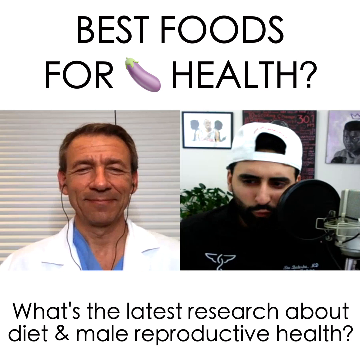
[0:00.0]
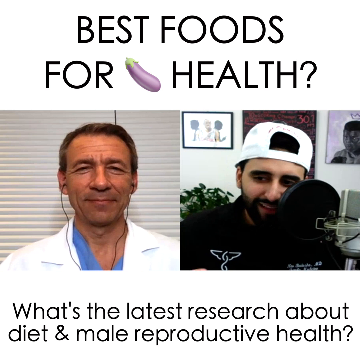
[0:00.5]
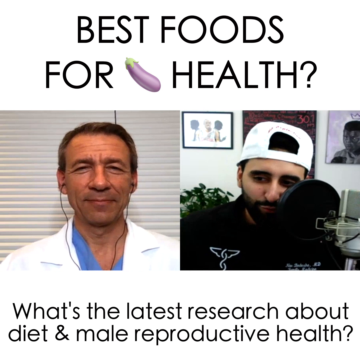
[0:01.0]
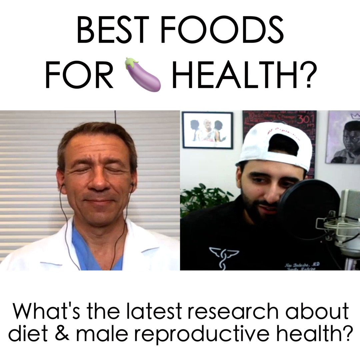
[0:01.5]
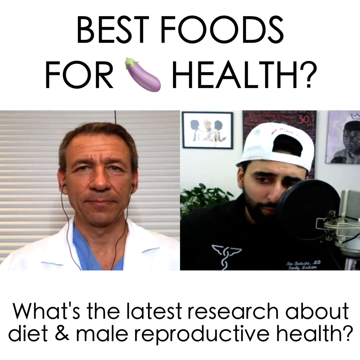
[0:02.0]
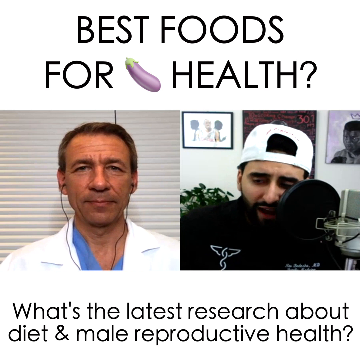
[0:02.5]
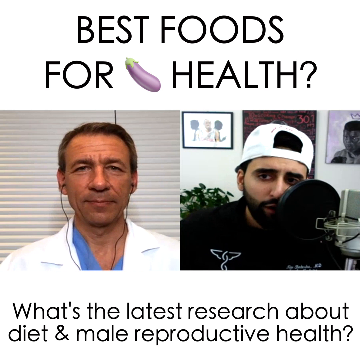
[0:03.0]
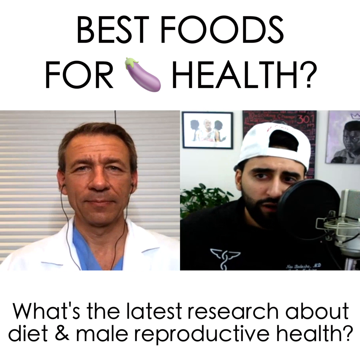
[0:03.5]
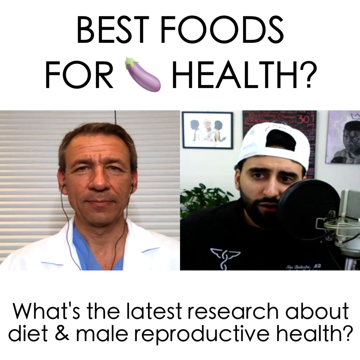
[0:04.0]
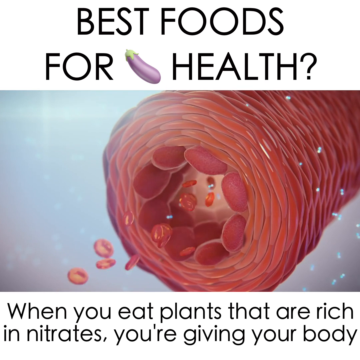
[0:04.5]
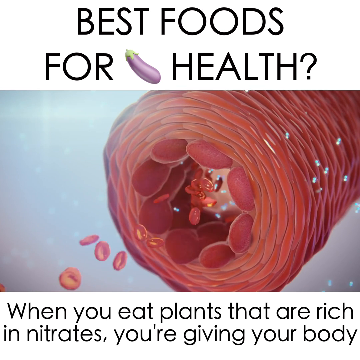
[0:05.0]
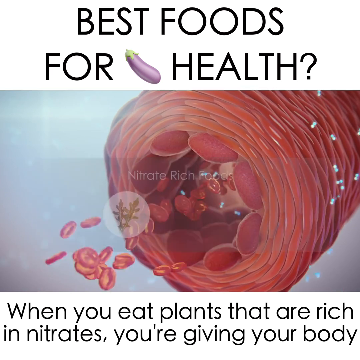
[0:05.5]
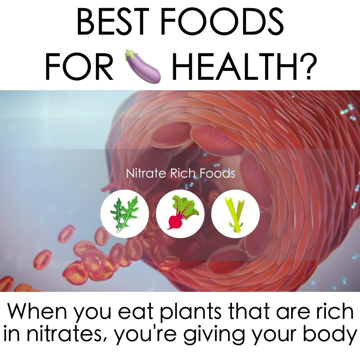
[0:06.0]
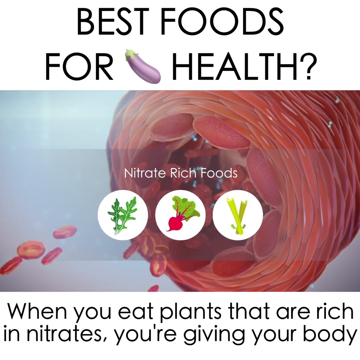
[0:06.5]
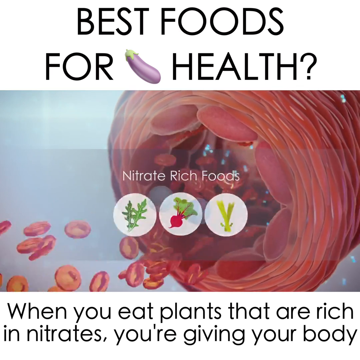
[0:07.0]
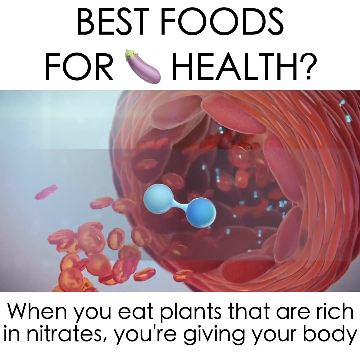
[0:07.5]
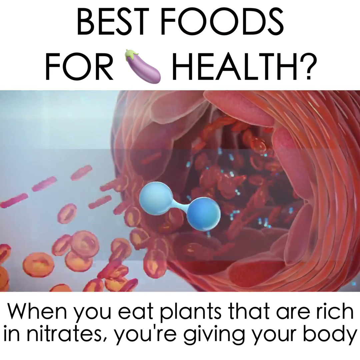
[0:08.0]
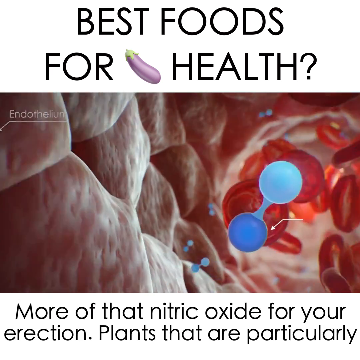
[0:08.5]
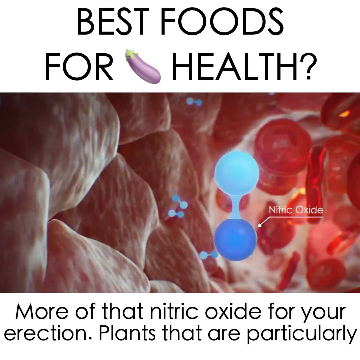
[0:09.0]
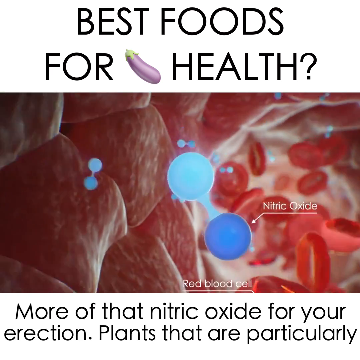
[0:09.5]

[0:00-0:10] What looks like a YouTube video or podcast shows a man on the right of the screen interviewing a doctor on the left. Each is in his own office or home, with different backgrounds. The man on the right wears a black shirt and a backwards white baseball cap, while the man on the left wears a blue doctor's shirt and a white doctor's jacket and has wired earphones in his ears. The man on the right talks into a microphone, smiling as he talks, while the man on the left listens and smiles. Across the top is a white band with black block-letter text reading "best foods for health", with an emoji of an aubergine after the word "for". Across the bottom is another white band with black text reading "what's the latest research about diet and male reproductive health". The video is then replaced by an animation of some kind of medical image depicting an unclear organ of the human body. Small red circles come out of what looks like a red tube, moving from right to left. In the centre of the screen are two blue circles joined by a blue line, and in the next shot this floats through a red tube. Over the red tube, white text reads "nitrate rich foods", and there are three images inside white circles: one of leafy greens, one of a radish and one of two sticks of celery. The text across the bottom reads "when you eat plants that are rich in nitrates you're giving your body", then changes to "more of that nitric oxide for your erection. Plants that are particularly".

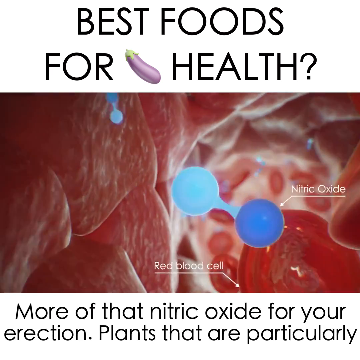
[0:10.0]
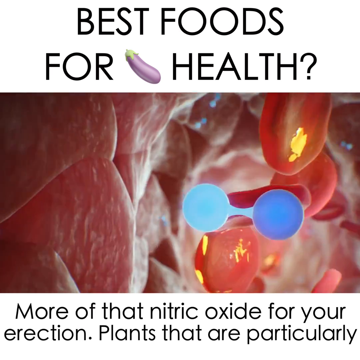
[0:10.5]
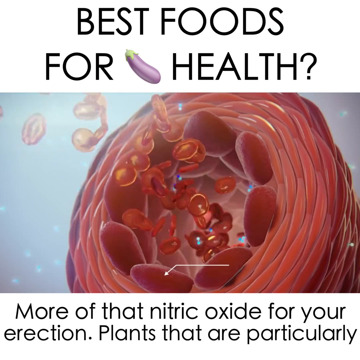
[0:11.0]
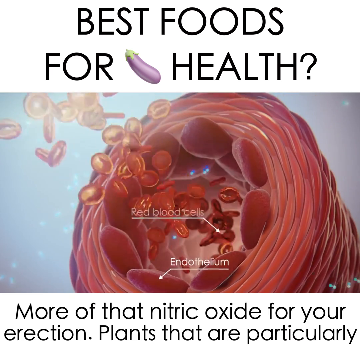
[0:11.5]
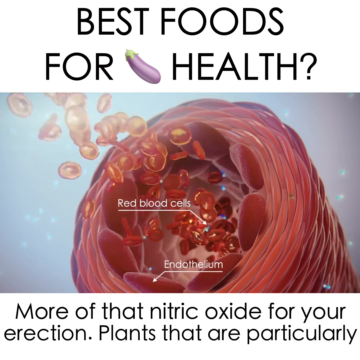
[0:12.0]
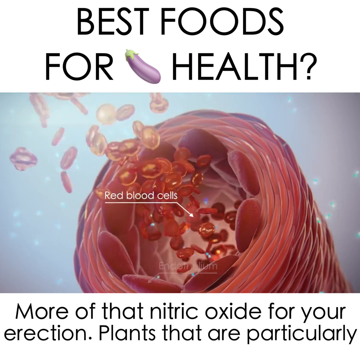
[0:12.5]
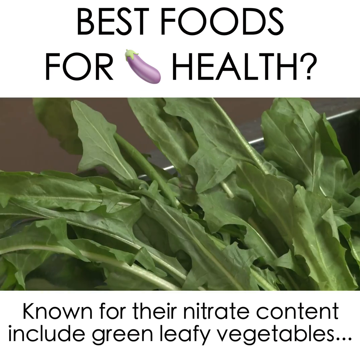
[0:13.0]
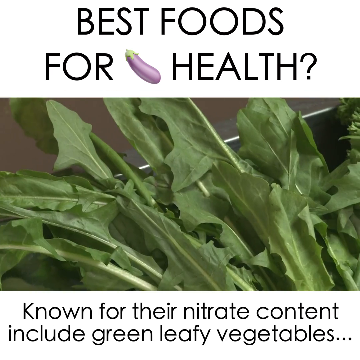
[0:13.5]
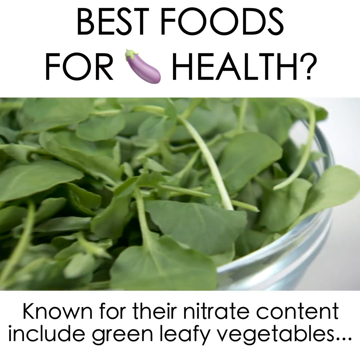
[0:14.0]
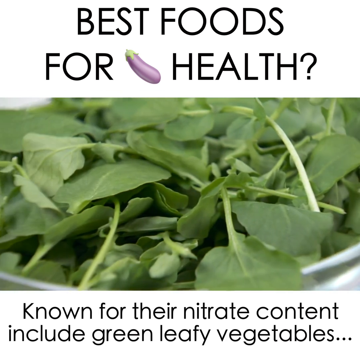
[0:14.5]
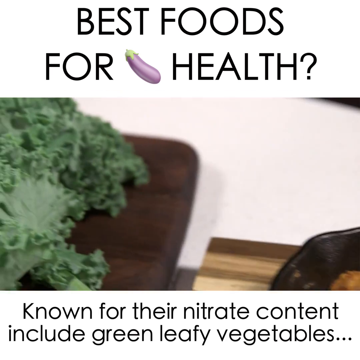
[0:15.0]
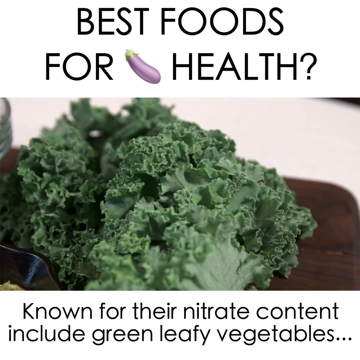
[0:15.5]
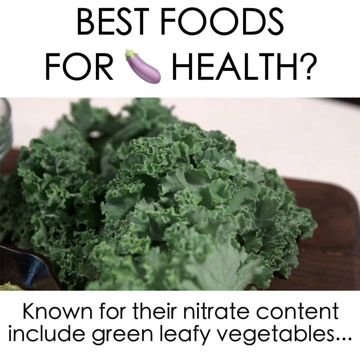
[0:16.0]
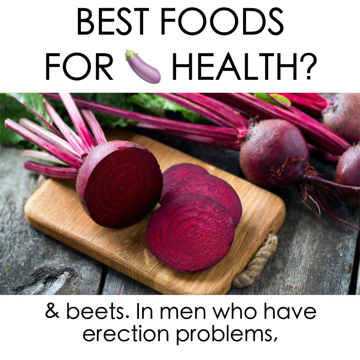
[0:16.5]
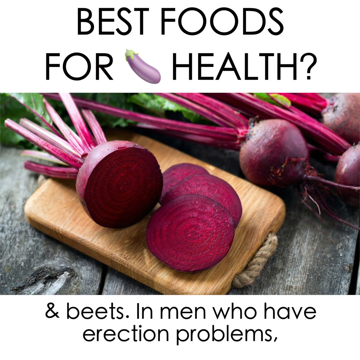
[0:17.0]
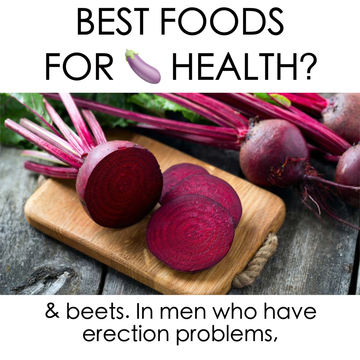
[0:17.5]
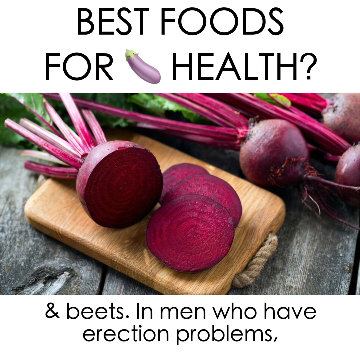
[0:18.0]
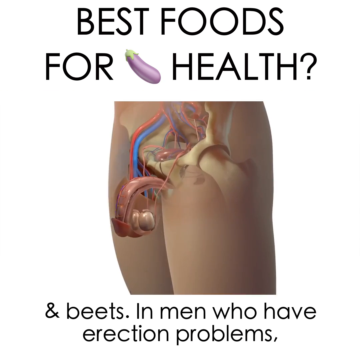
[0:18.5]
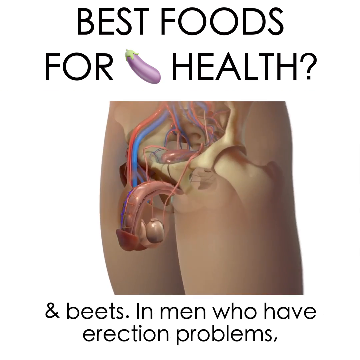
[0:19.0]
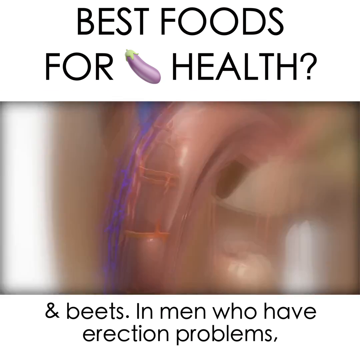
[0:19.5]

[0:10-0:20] An animation shows something happening inside the human body: the view is inside a red tube, with red circles floating through it along with two blue circles joined by a blue line. Across the top, black block-letter text on white reads "best foods for health", with an emoji of an aubergine after the word "for". Across the bottom, black text on a white background reads "more of that nitric oxide for your erection, plants that are particularly". The animation then changes to show the red circles exiting the opening of the tube, floating from the lower right of the screen to the upper left. White text pointing to the red circles reads "red blood cells", and further white text pointing to the edge of the cylinder reads "endothelium". The bottom text changes to "known for their nitrate content, include green leafy vegetables". The central image changes to a close-up of some kind of leafy green vegetable similar to lettuce, with very long loose leaves. This is replaced by another photo of leafy greens, this time looking like baby spinach in a bowl, and then by a bunch of kale on a wooden board. Next the photo changes to a beet sliced in half, with three slices of beet to its right on a wooden board. In the background across the top of the screen are three more beets, with their long pink stalks and some of their leaves visible in the top left-hand corner. The wooden board seems to be resting on a weathered grey table, and the bottom text reads "and beets, in men who have erection problems". The next image is a diagram of a penis that seems to be an animation of an x-ray, showing the internal workings of the male reproductive system. The text across the top and bottom stays the same.